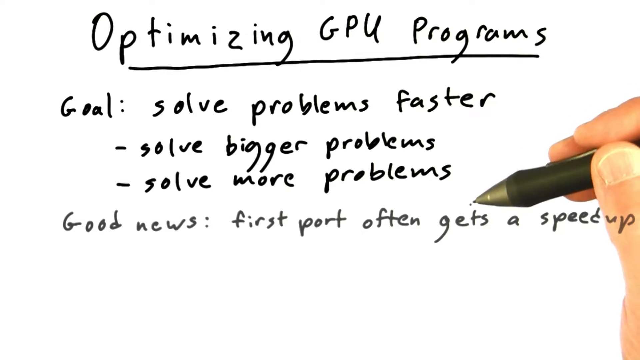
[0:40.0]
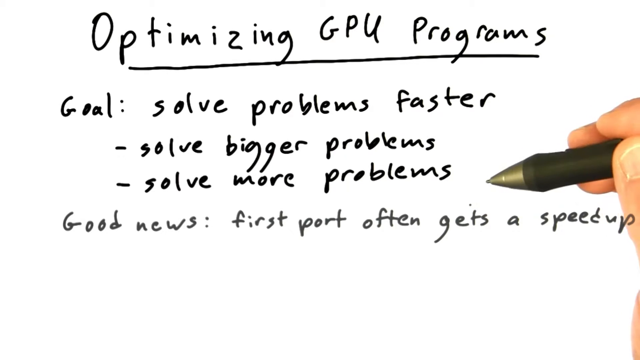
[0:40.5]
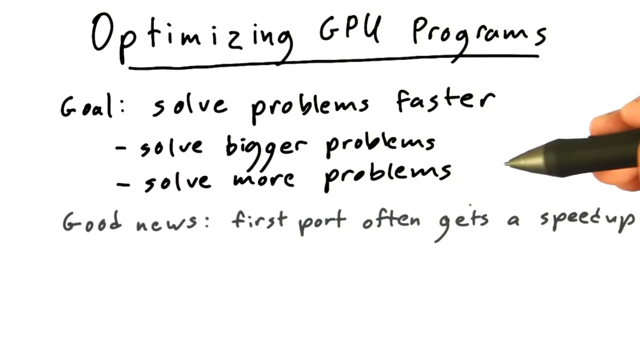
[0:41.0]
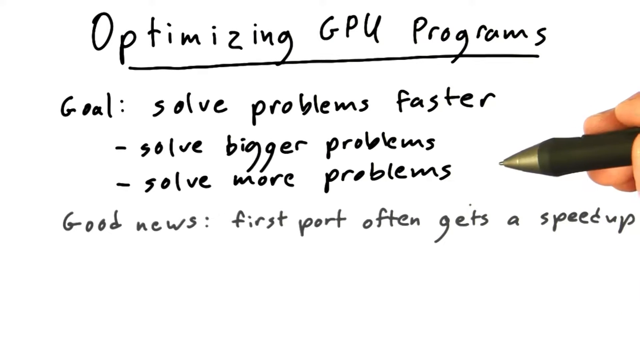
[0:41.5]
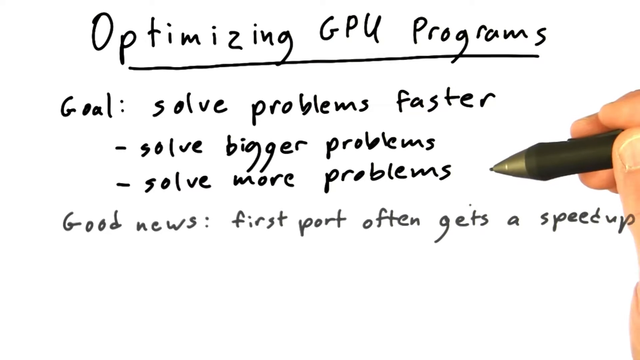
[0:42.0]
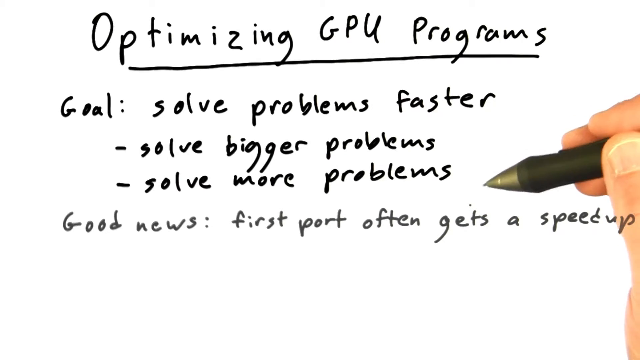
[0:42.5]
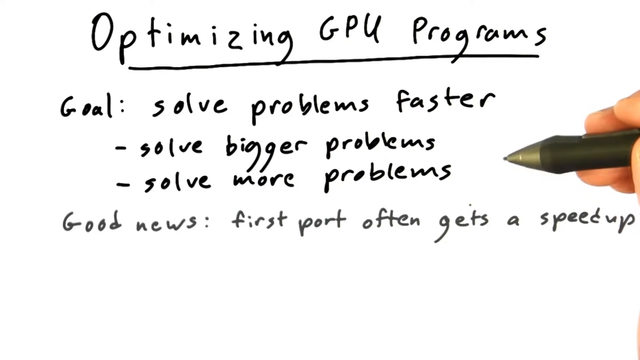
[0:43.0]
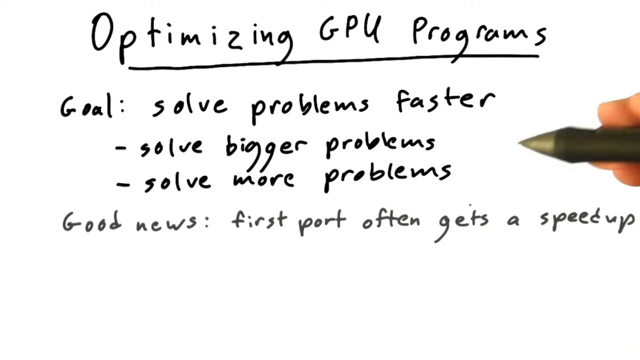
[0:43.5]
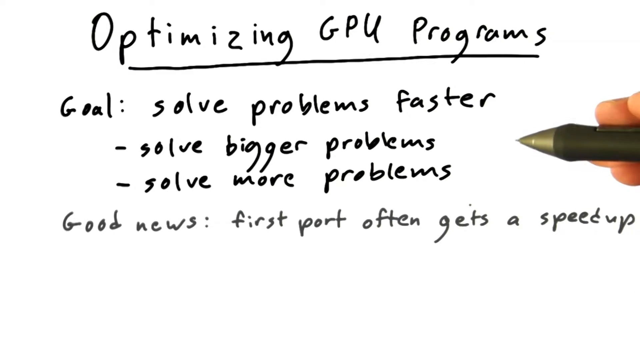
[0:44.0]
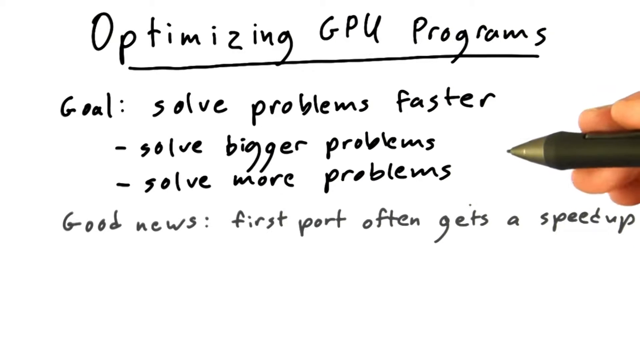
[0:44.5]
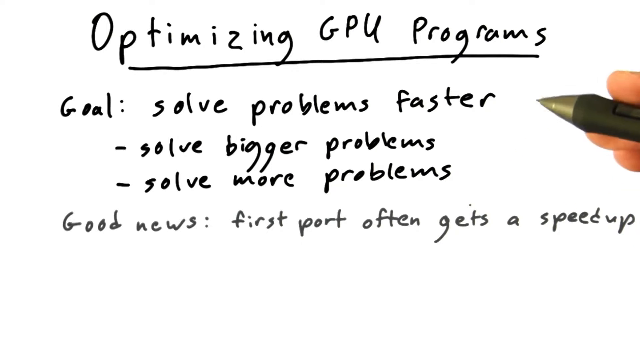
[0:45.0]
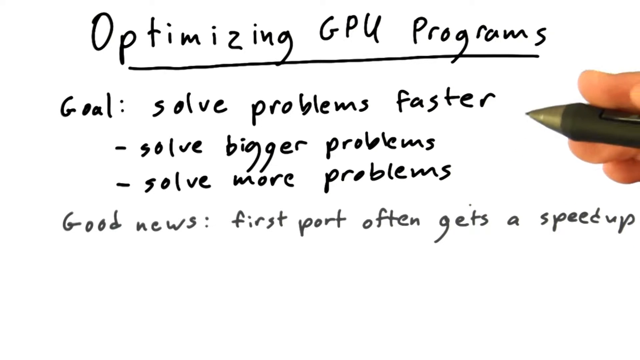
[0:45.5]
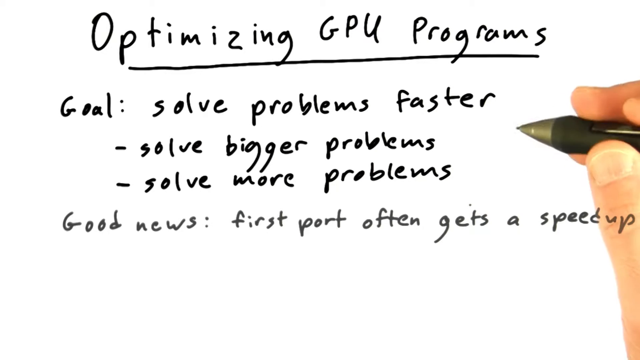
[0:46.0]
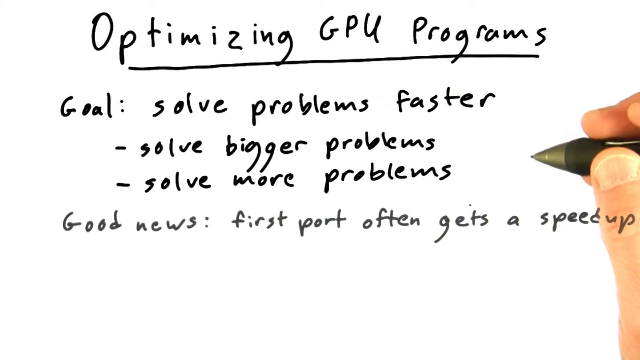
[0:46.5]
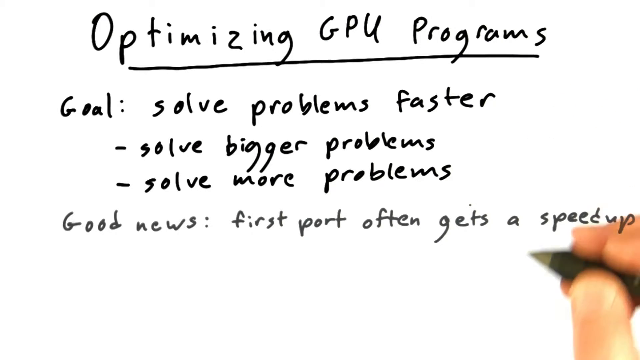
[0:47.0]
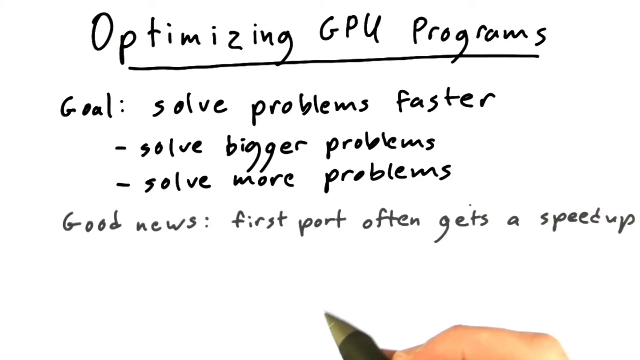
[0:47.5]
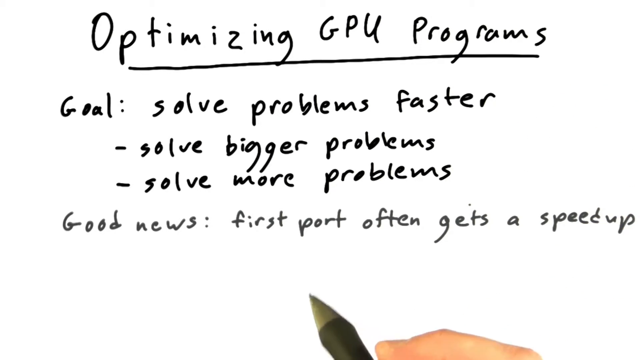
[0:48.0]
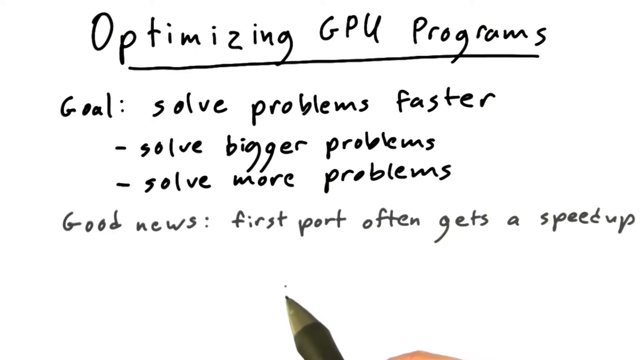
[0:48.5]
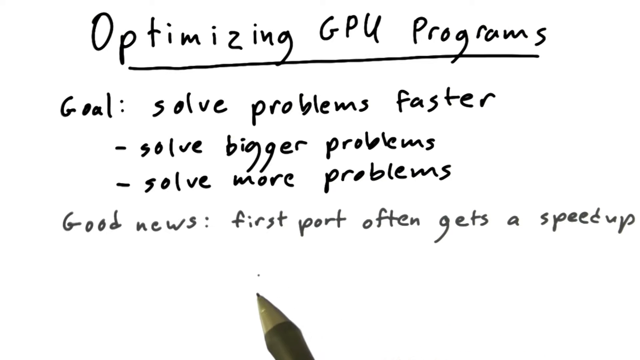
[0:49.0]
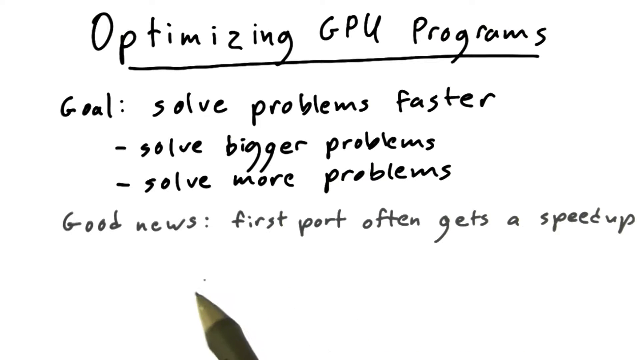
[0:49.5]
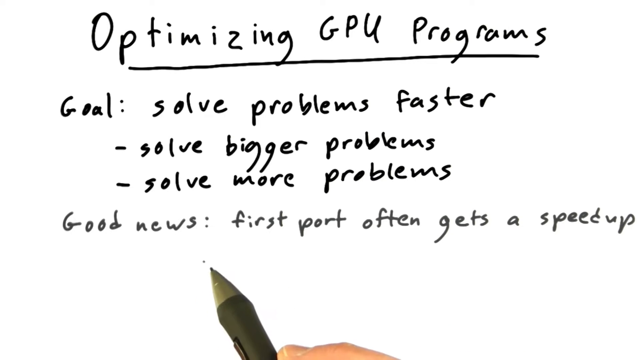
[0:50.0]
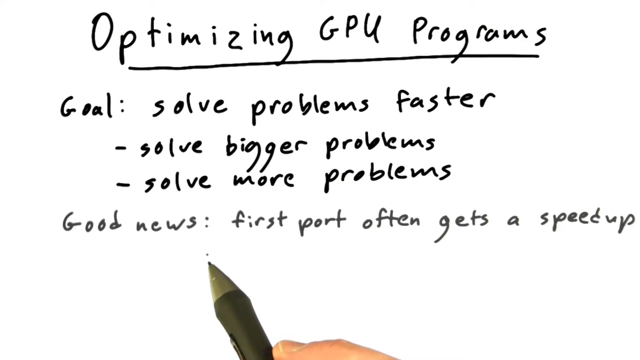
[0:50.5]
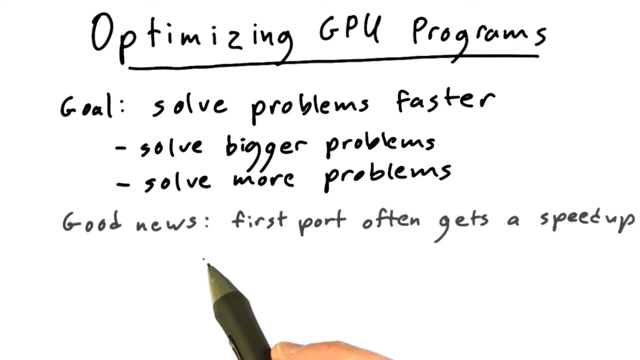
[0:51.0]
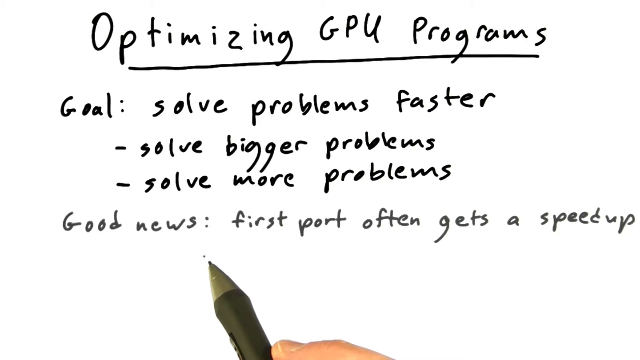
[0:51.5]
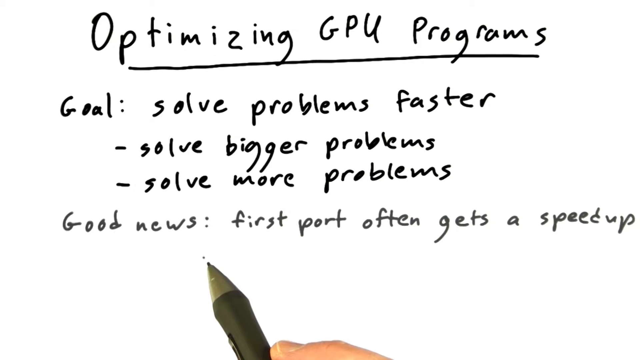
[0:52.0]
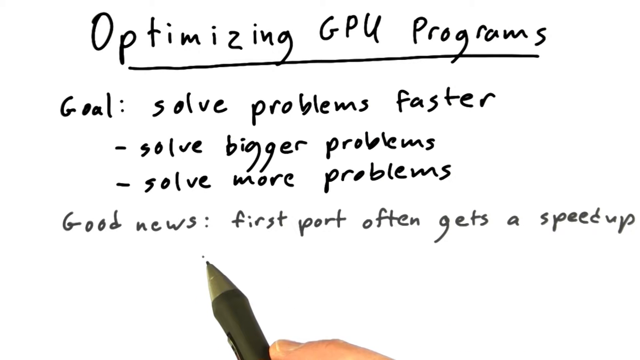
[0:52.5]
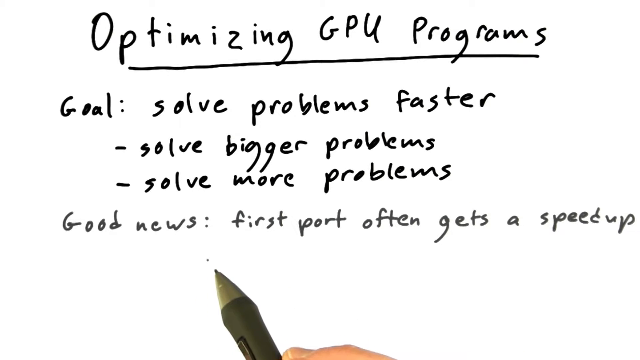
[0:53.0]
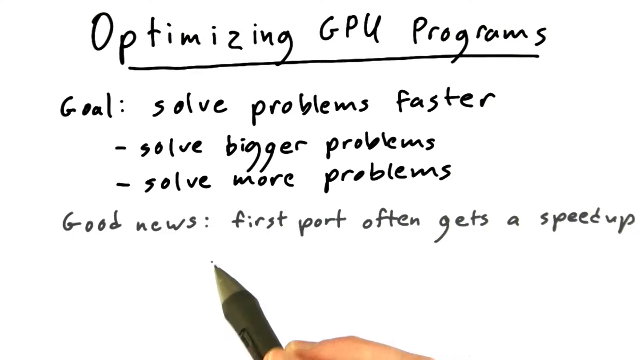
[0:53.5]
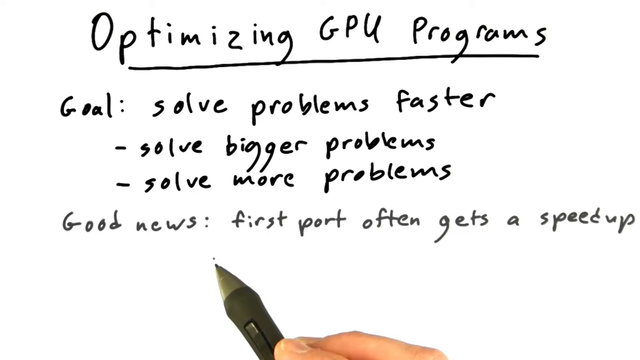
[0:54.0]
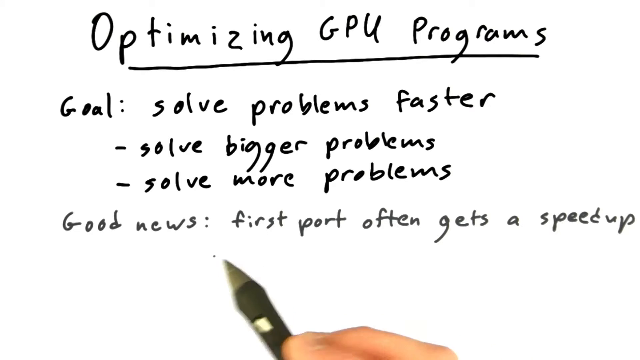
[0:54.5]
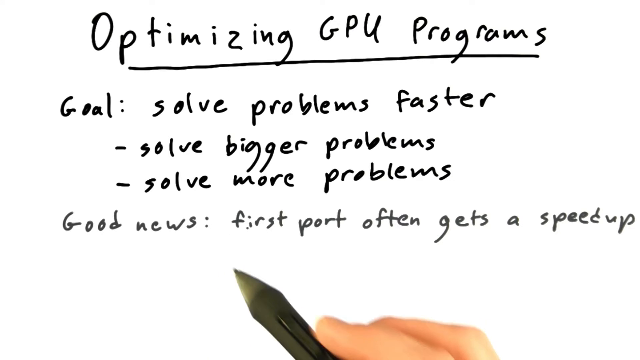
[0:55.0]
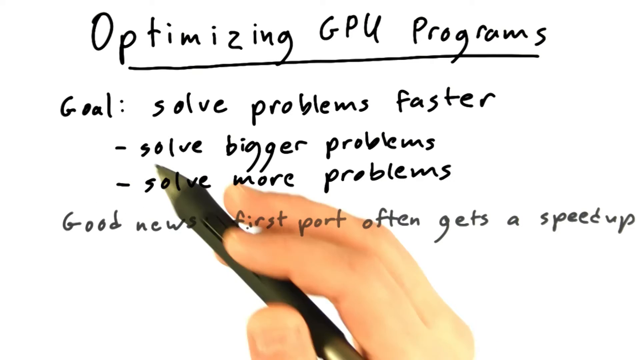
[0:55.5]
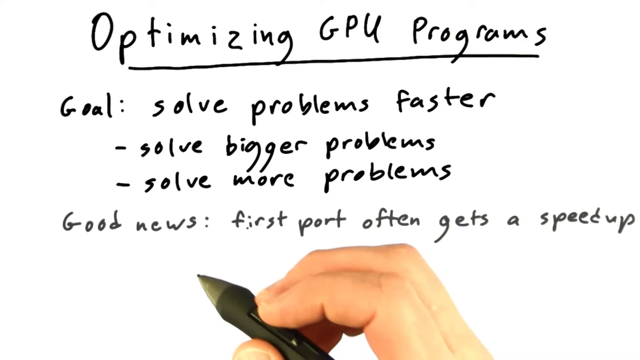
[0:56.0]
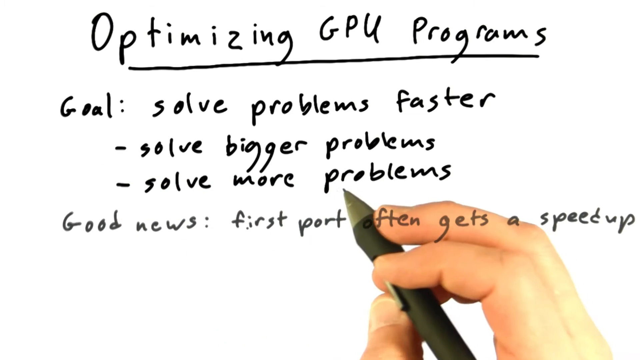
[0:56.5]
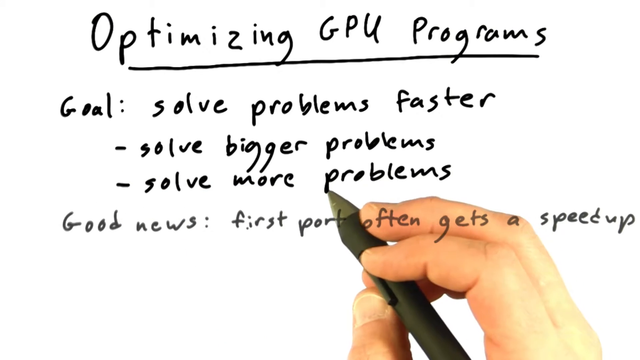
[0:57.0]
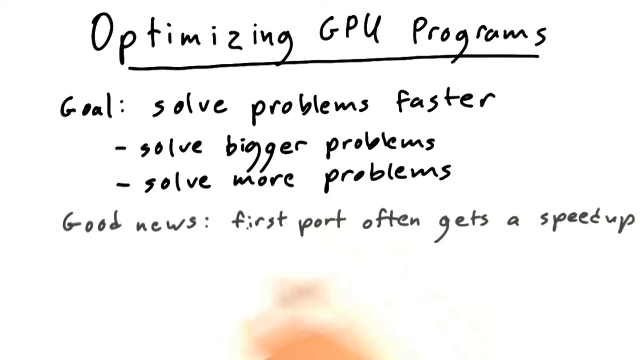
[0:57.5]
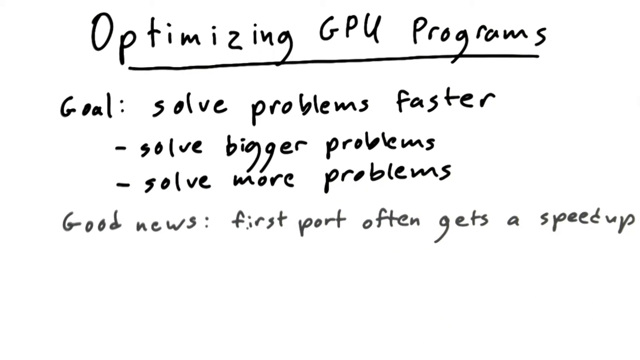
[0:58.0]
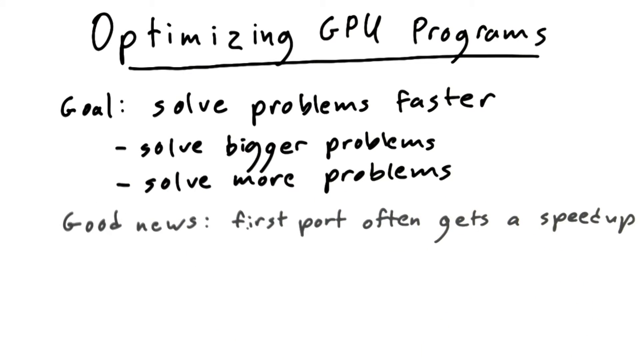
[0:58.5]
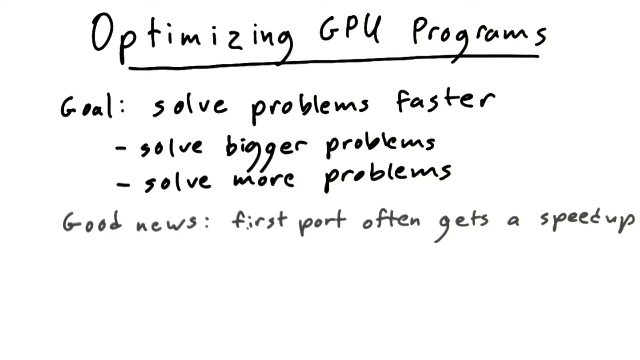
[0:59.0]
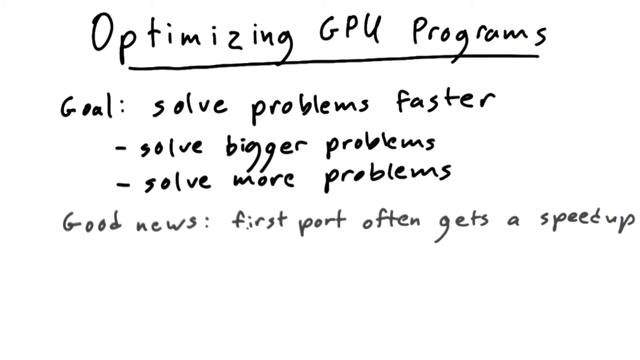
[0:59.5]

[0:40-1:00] The pen is held in the middle right-hand section of the screen, gripped about a quarter of the distance from the tip by three visible fingers. The person wiggles the pen slightly around that area. Their thumb appears and the hand moves down to the bottom right corner of the screen. They then move the pen toward the left side of the screen, lowering their fingers out of view so that only the tip of the pen is visible. The pen hovers over the bottom middle section of the screen. The fingers are pushed upward, and three fingers and a thumb are seen holding the pen. Then the hand goes down and the pen and fingers disappear completely off the screen.